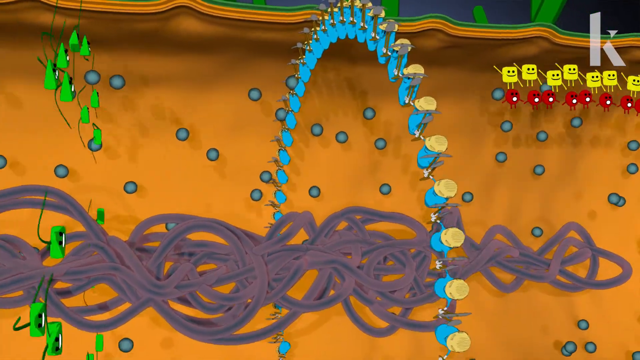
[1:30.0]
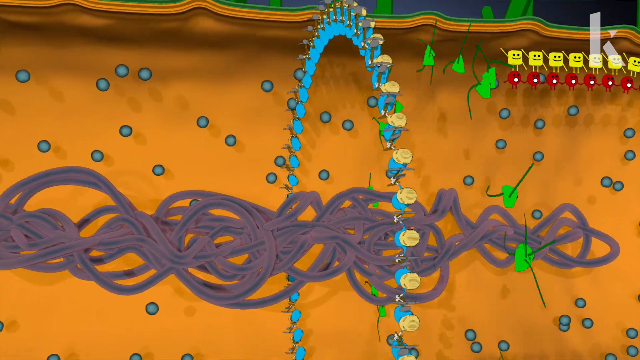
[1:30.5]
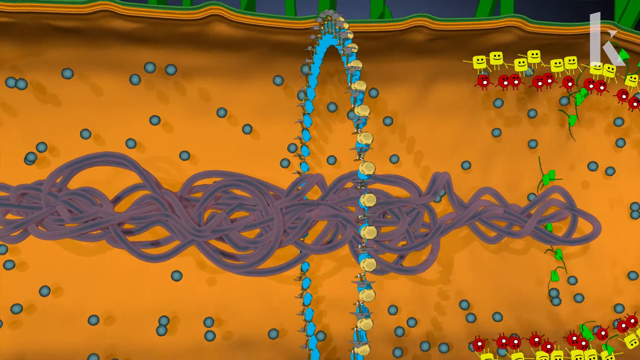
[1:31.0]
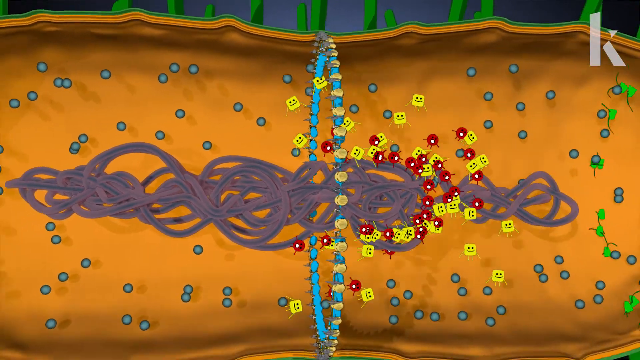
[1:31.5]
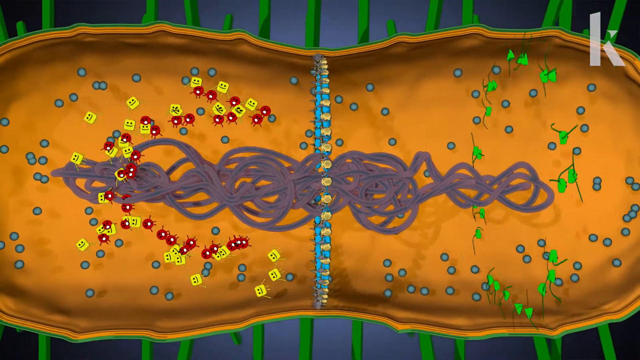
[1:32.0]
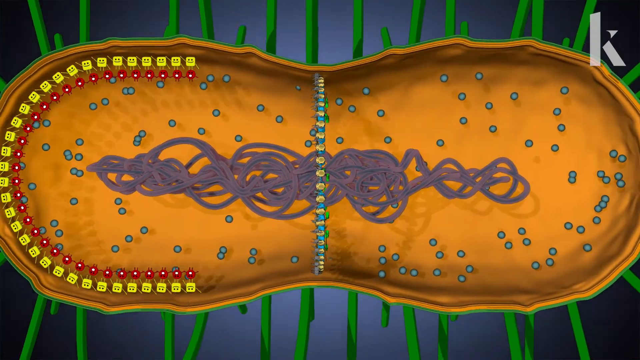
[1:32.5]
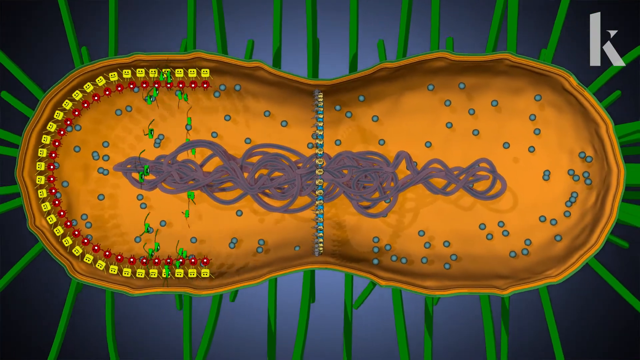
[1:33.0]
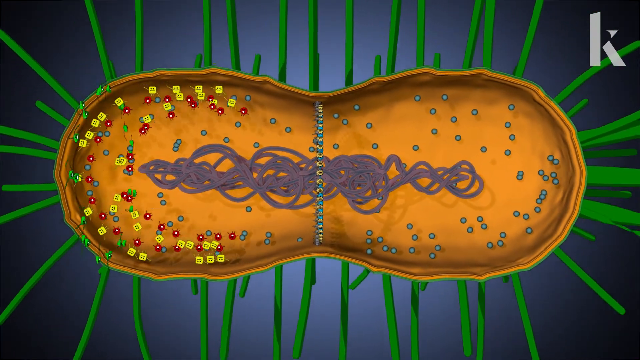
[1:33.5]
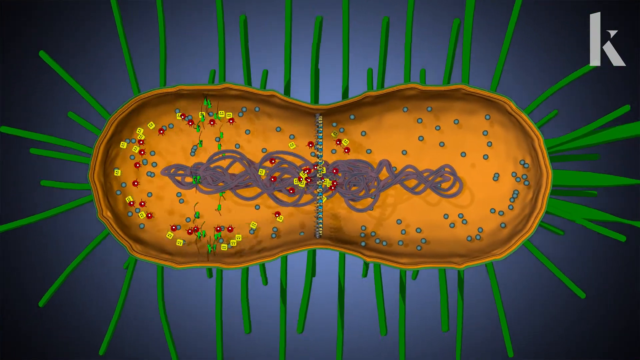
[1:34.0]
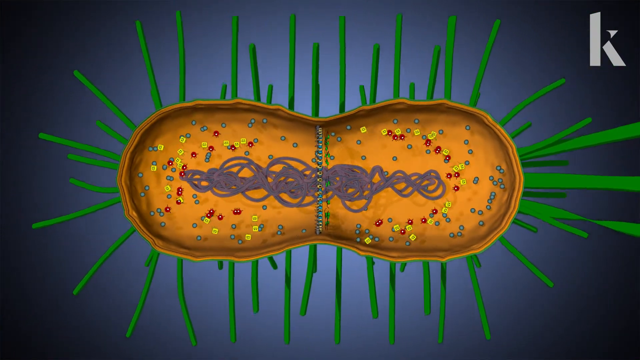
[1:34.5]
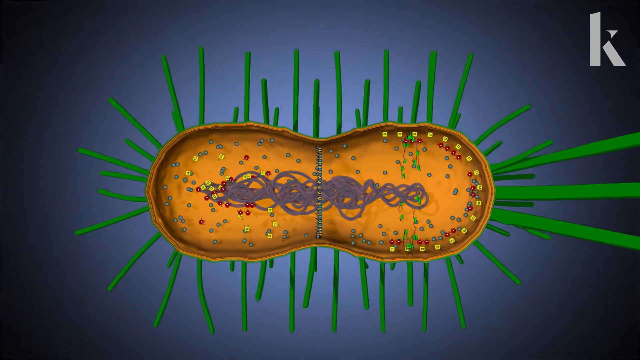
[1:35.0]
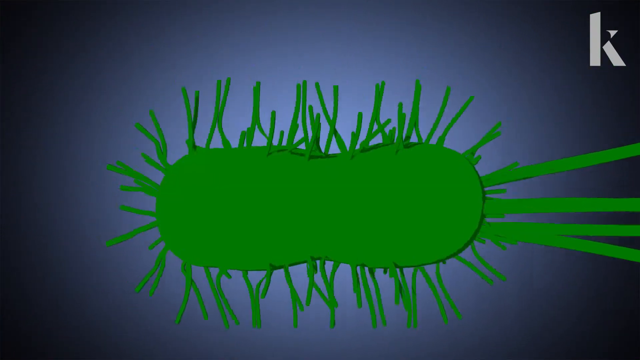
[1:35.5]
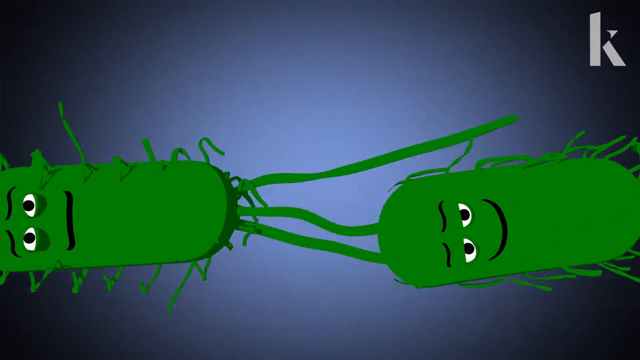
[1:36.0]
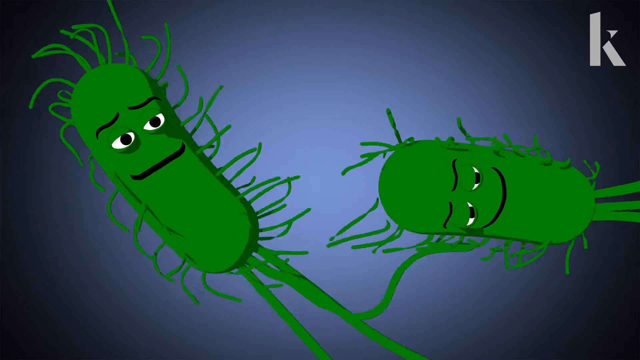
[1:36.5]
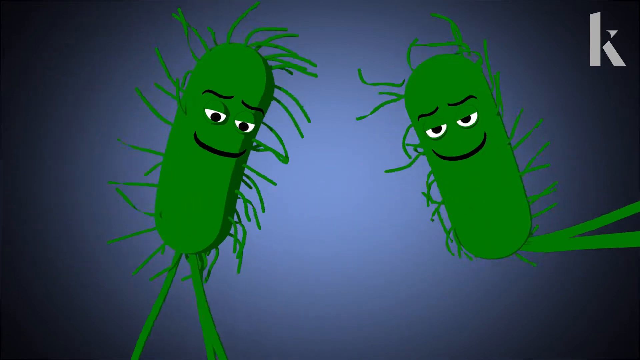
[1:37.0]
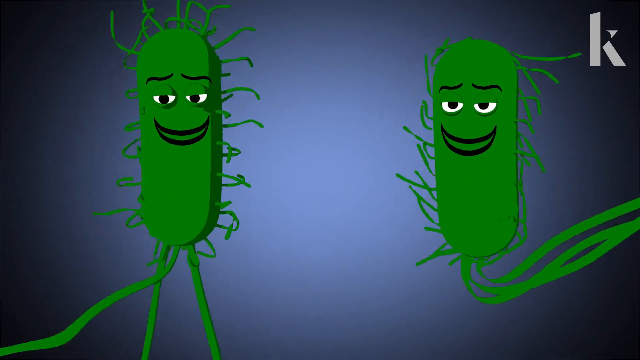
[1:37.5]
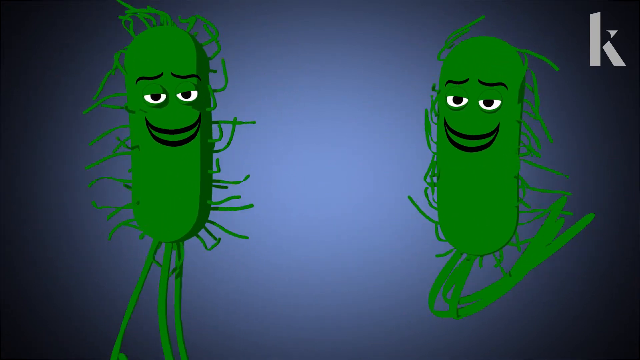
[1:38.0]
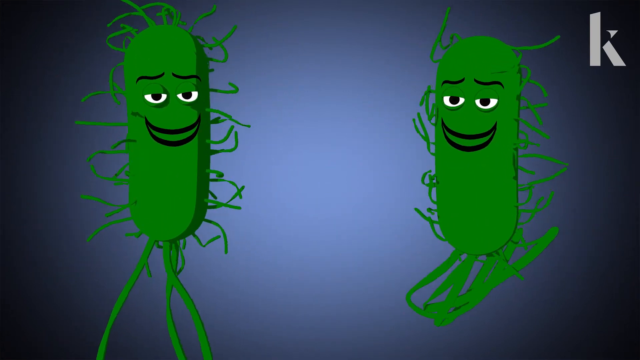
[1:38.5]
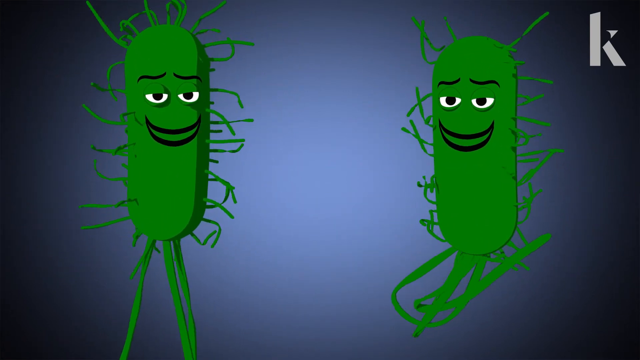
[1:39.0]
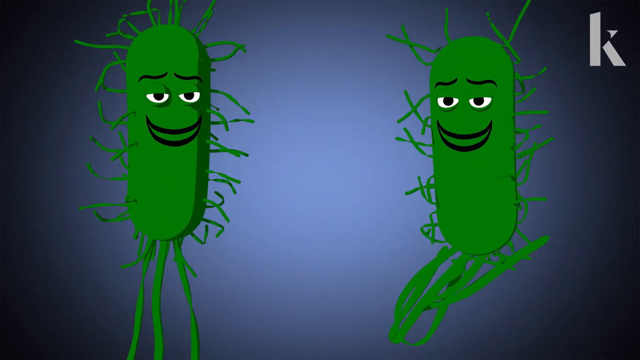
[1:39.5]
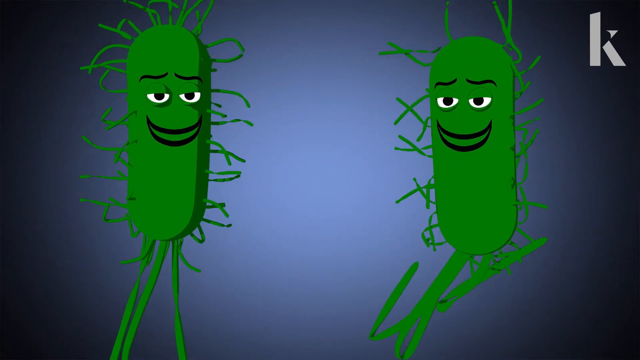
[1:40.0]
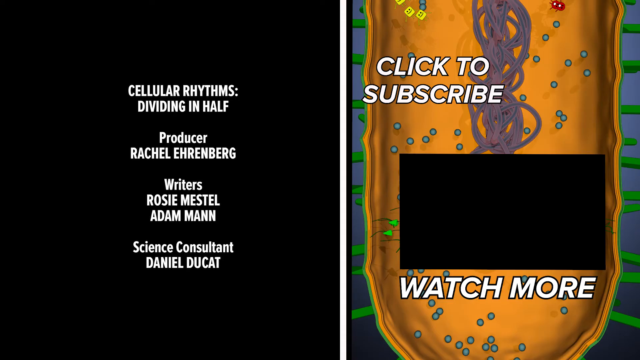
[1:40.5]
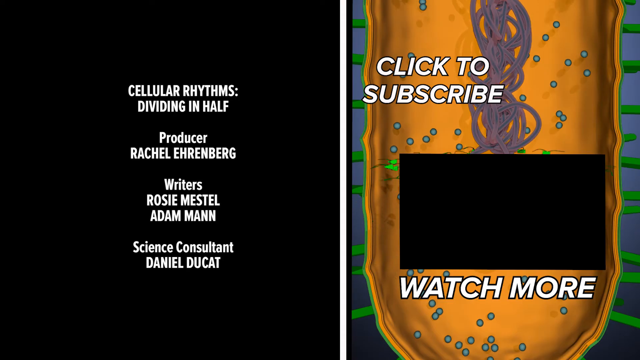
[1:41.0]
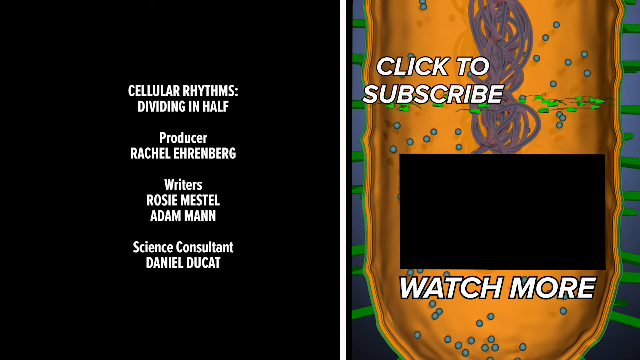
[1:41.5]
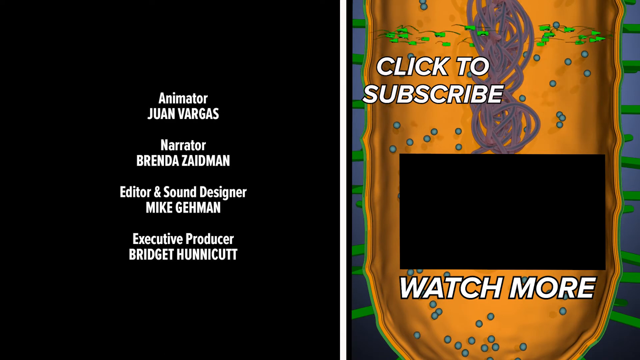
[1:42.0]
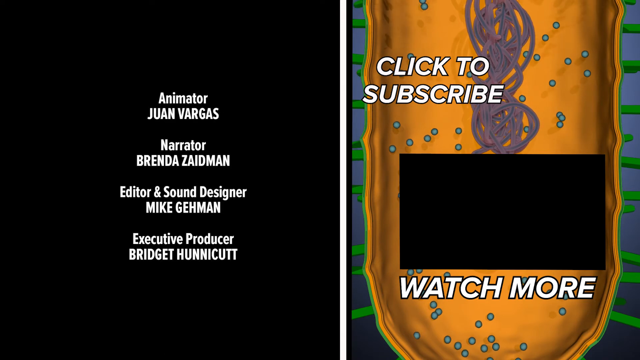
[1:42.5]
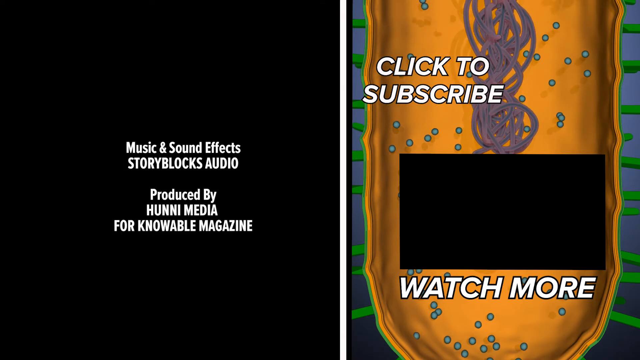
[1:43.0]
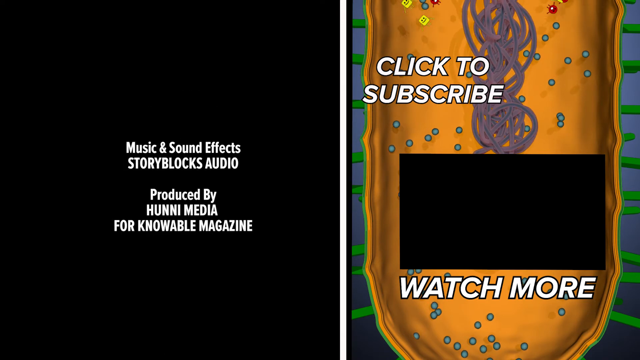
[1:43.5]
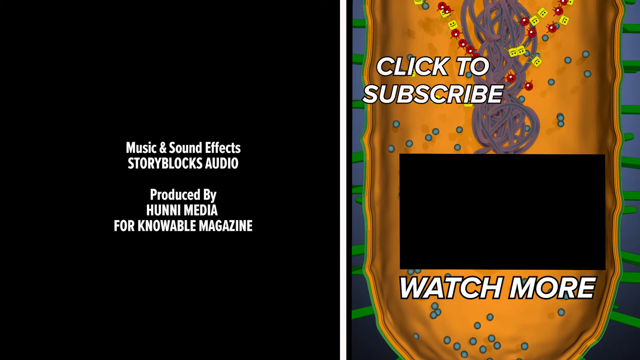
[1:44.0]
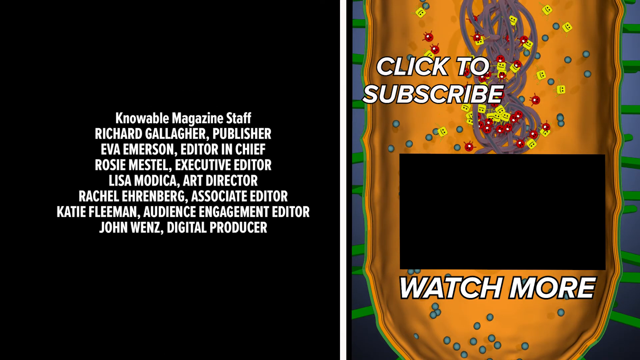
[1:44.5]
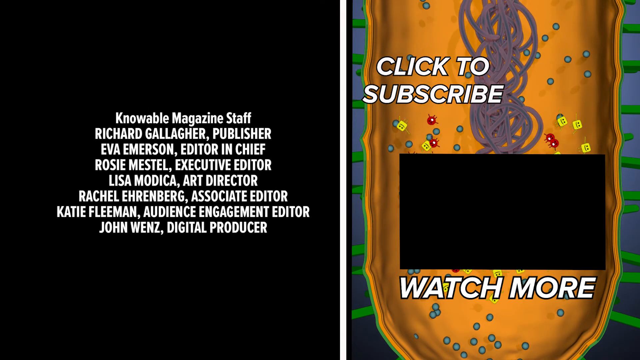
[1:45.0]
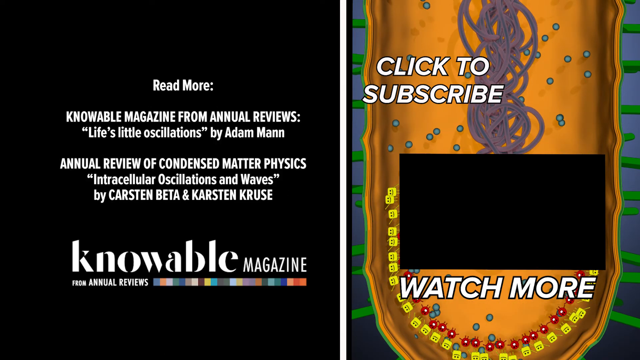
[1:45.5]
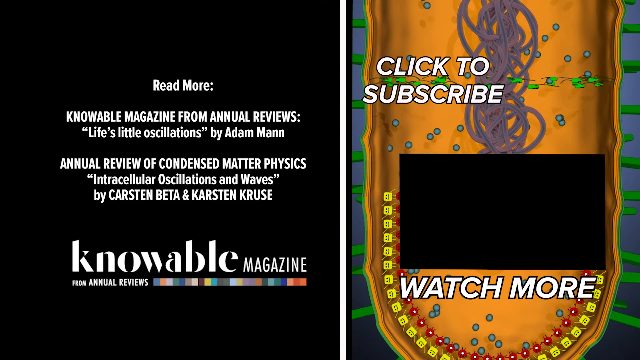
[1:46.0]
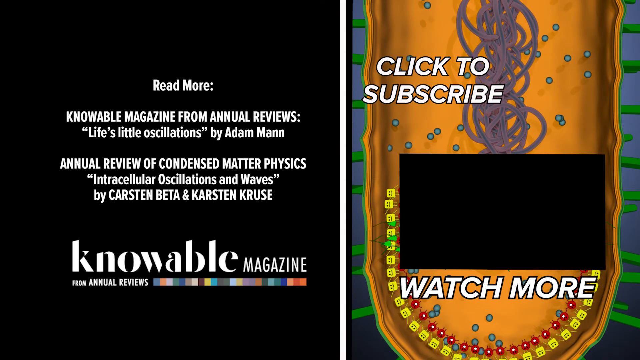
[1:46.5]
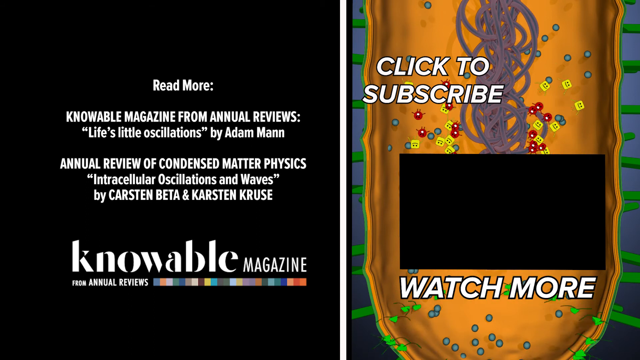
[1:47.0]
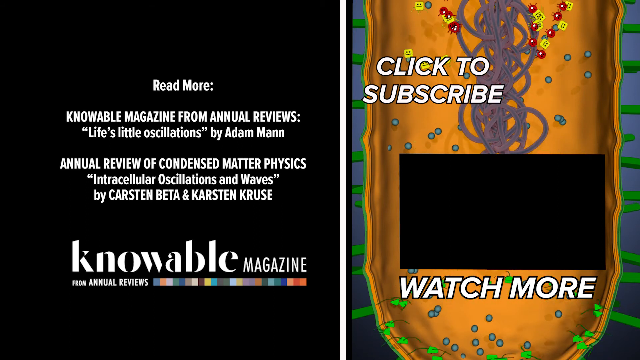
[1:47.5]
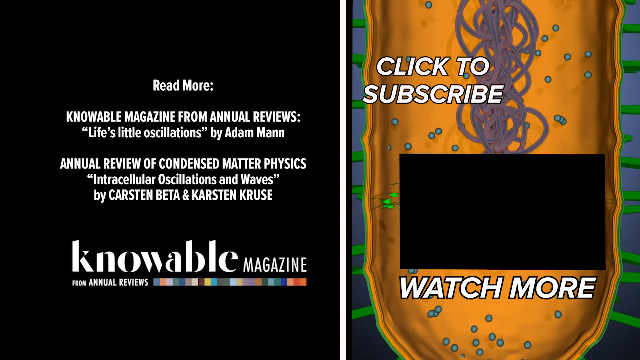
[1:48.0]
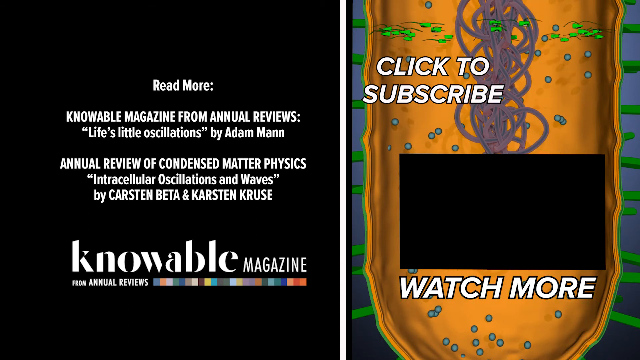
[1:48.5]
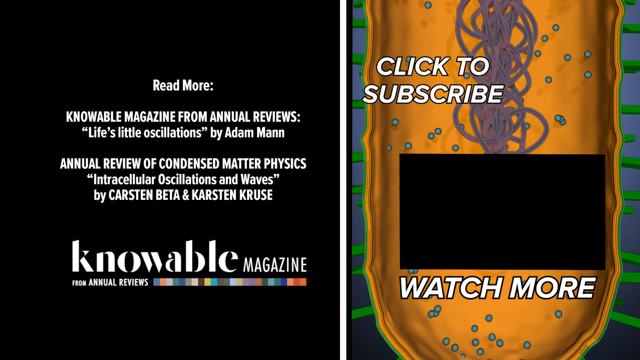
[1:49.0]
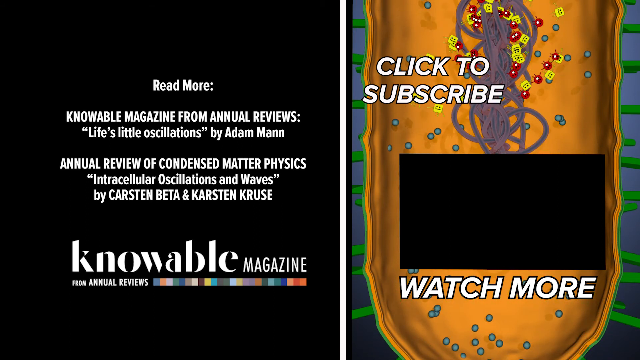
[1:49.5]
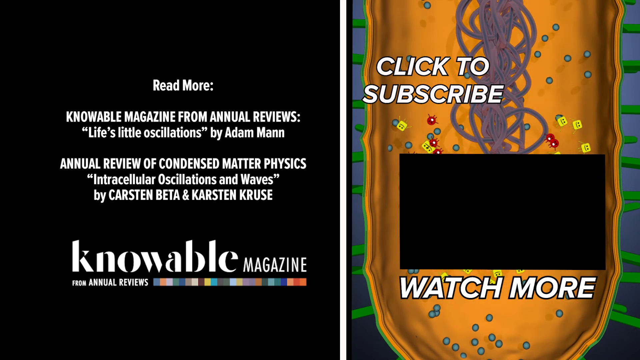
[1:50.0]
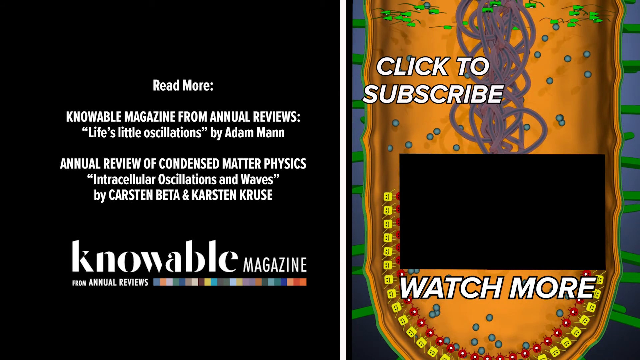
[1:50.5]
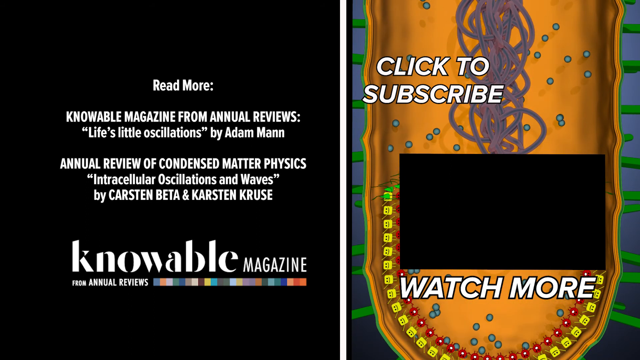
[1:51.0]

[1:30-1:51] The green triangle-shaped animations follow the red circles and yellow squares left and right across the bacterium, seen in a zoomed-in view of its inside. A squiggly line runs horizontally through the middle of the bacterium. The blue/cyan long animations with hard hats, shovels, pickaxes and gloves form a ring right in the middle of the bacterium, and the green, yellow and red animations pass through this circle, going left and right for most of the shot. Finally, a zoomed-out view shows the bacterium splitting into two identical bacteria.